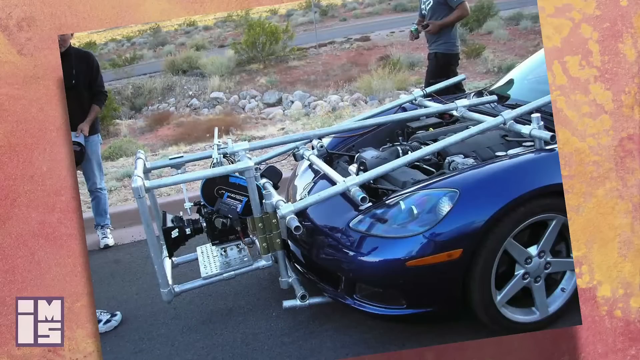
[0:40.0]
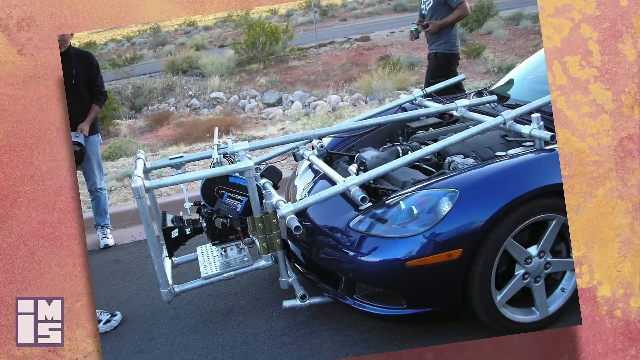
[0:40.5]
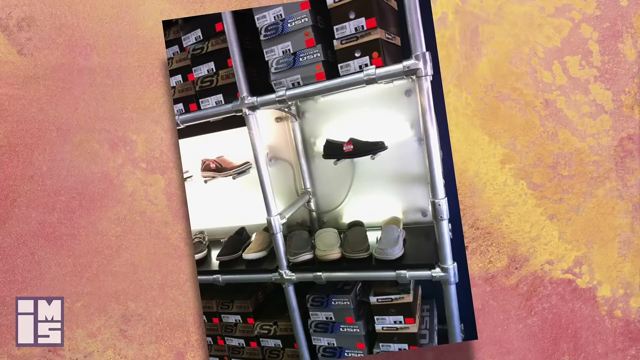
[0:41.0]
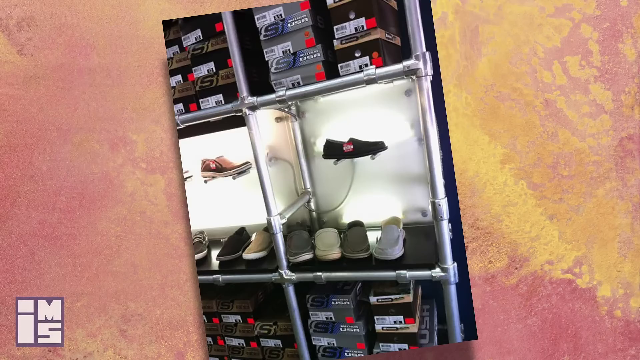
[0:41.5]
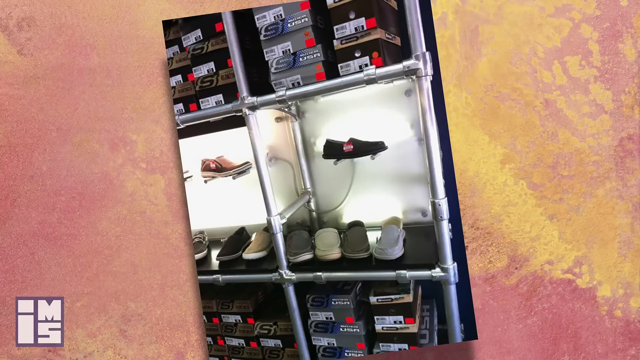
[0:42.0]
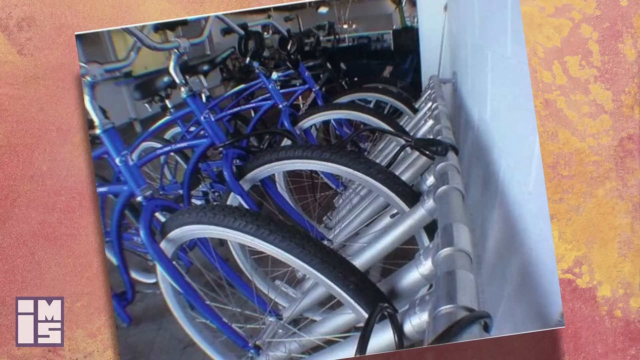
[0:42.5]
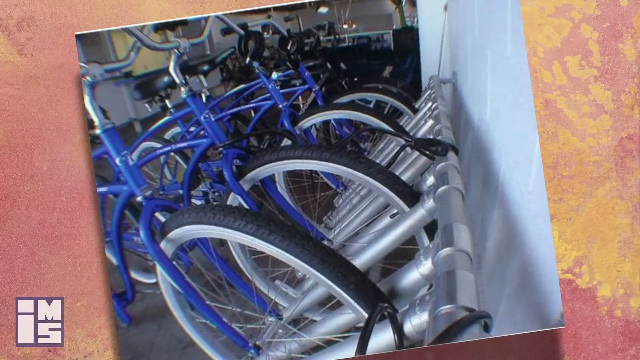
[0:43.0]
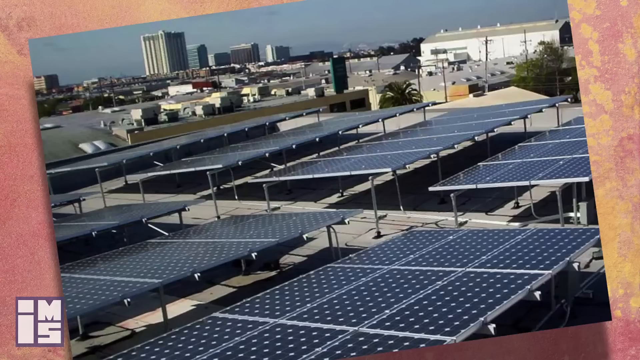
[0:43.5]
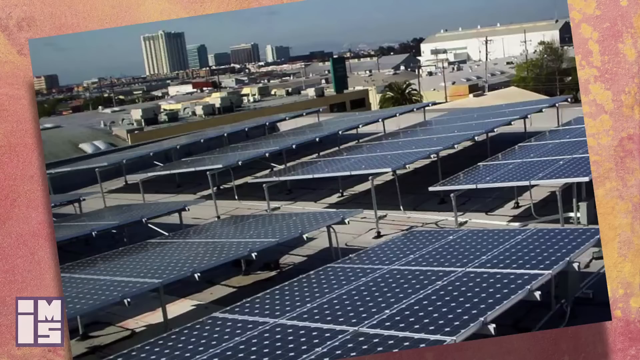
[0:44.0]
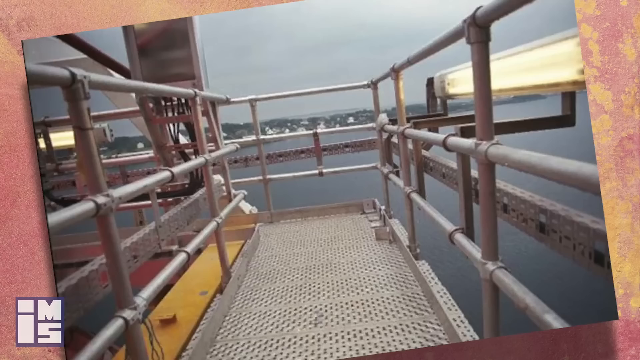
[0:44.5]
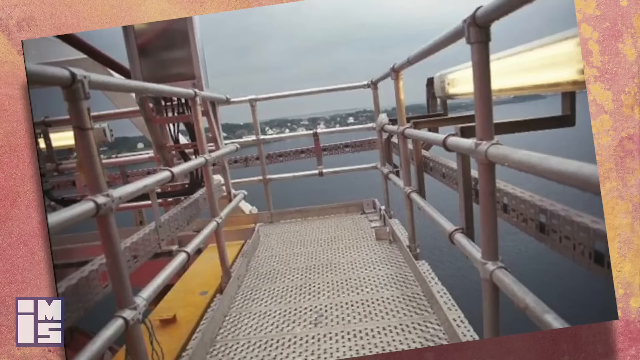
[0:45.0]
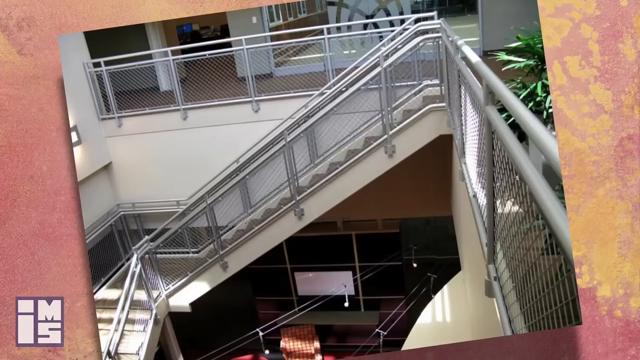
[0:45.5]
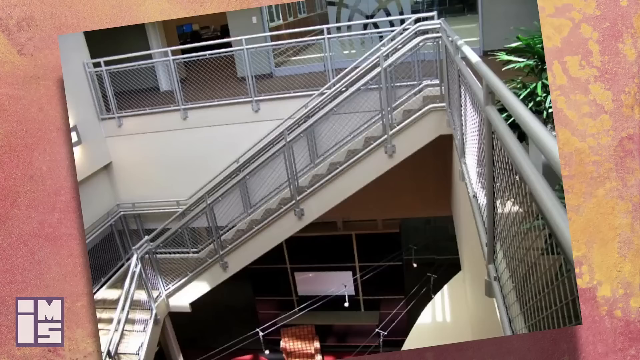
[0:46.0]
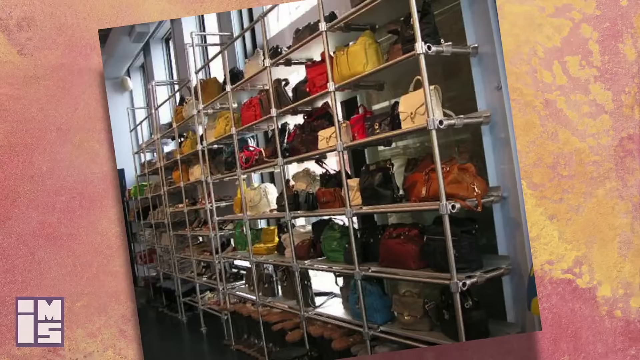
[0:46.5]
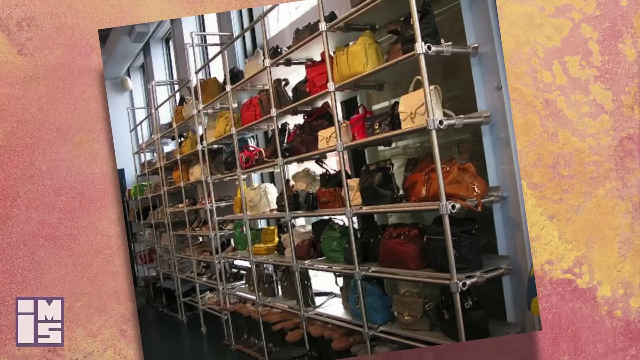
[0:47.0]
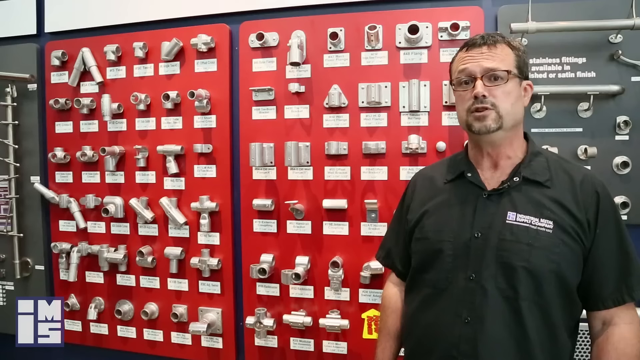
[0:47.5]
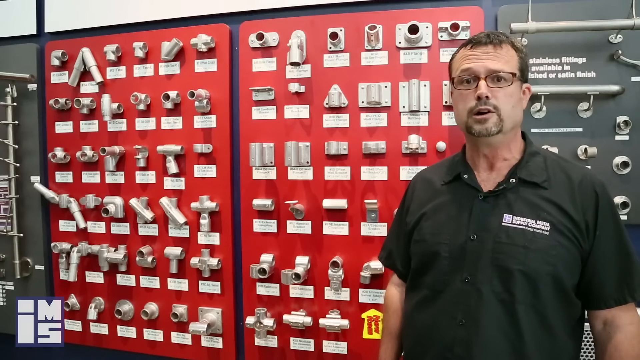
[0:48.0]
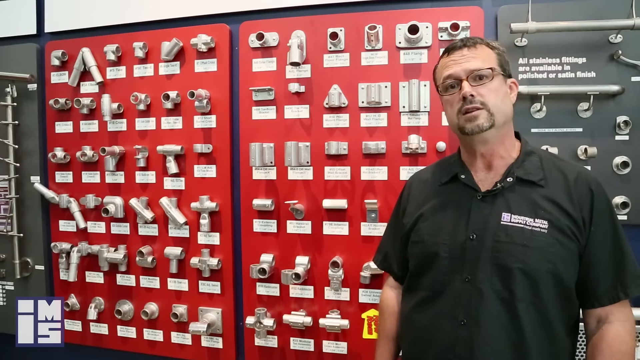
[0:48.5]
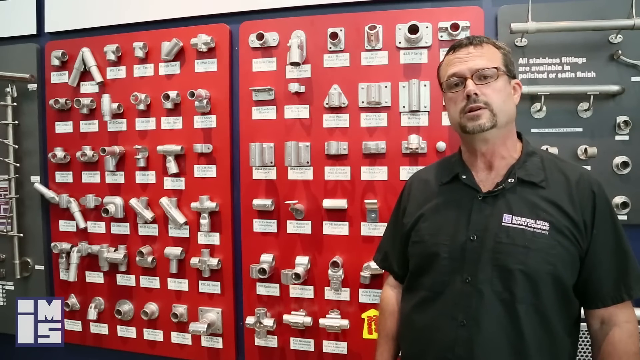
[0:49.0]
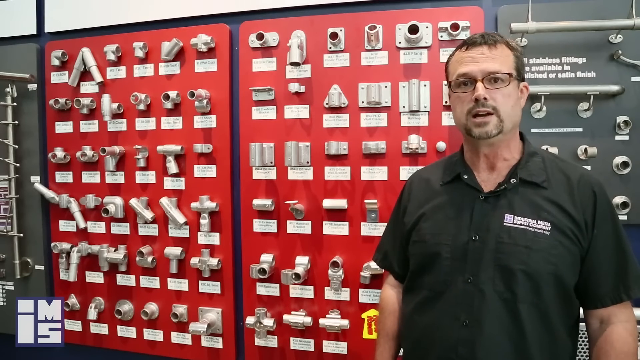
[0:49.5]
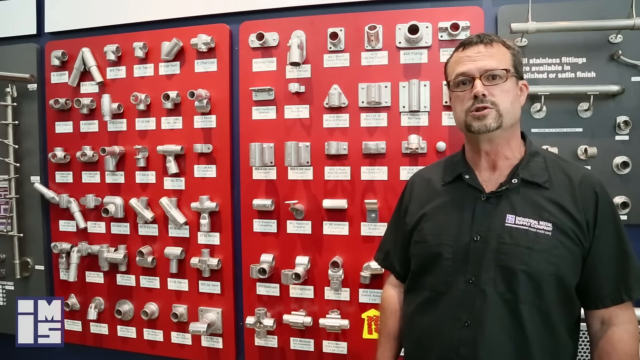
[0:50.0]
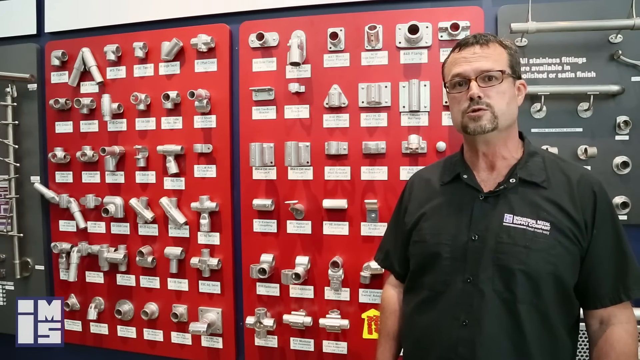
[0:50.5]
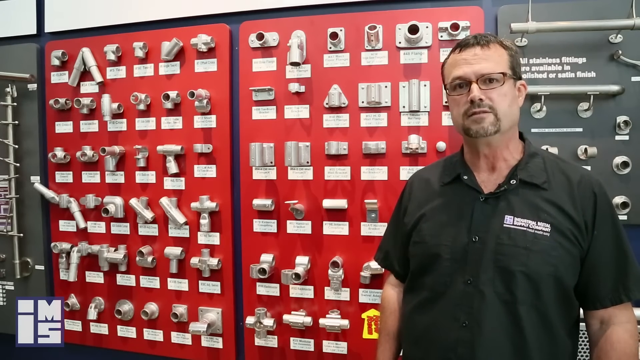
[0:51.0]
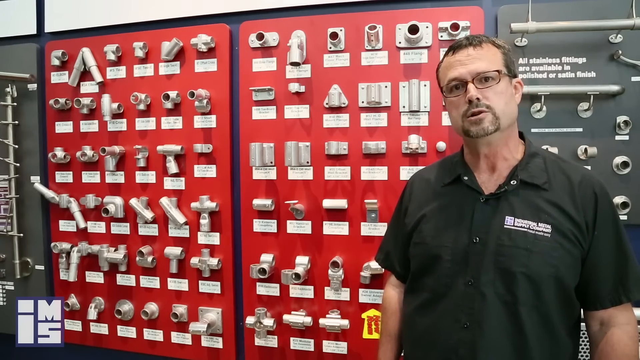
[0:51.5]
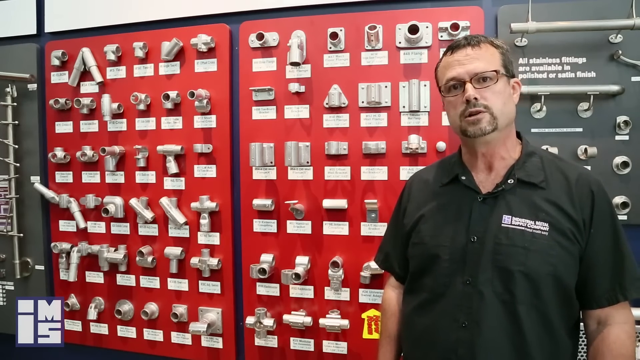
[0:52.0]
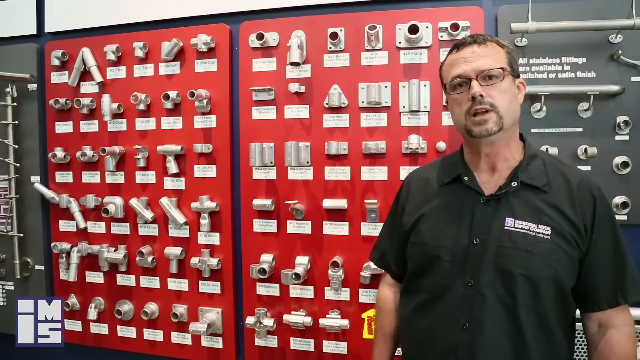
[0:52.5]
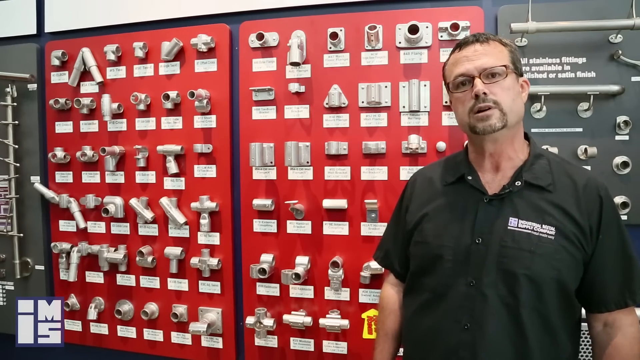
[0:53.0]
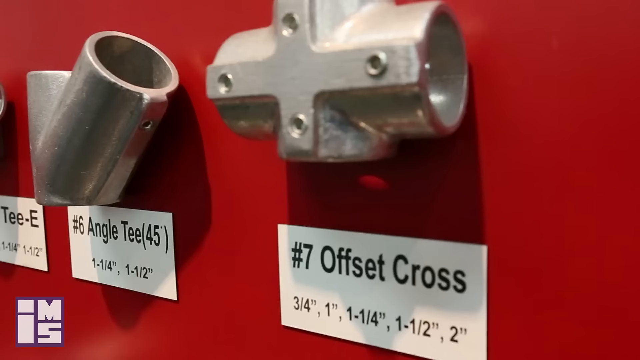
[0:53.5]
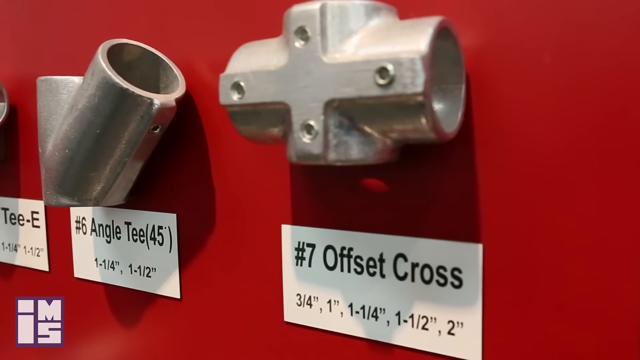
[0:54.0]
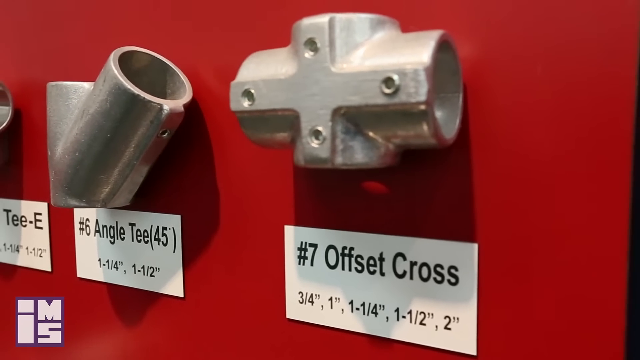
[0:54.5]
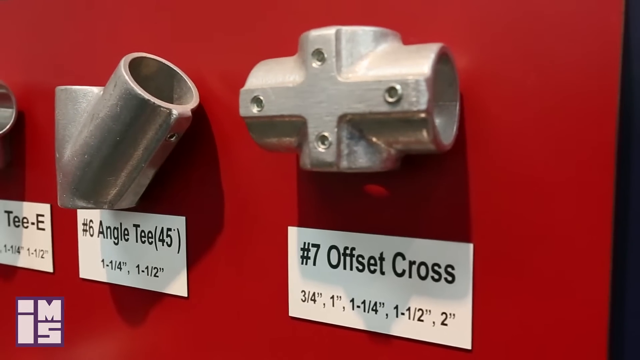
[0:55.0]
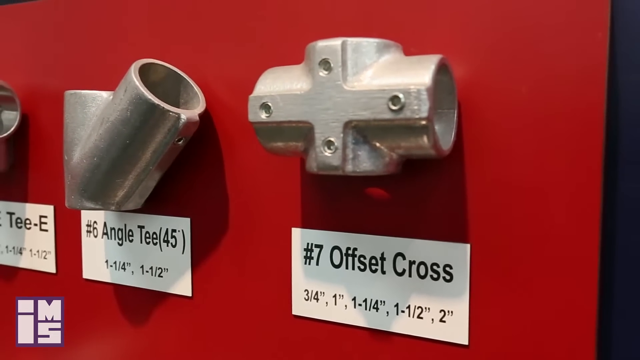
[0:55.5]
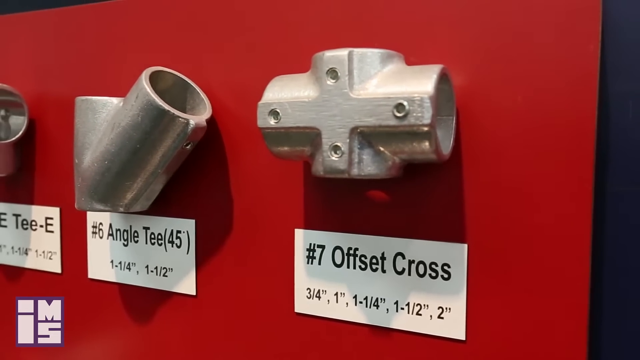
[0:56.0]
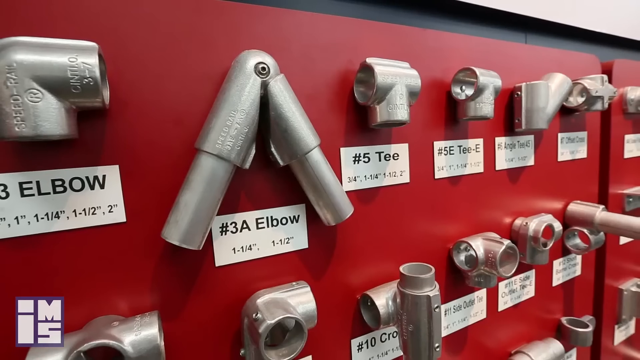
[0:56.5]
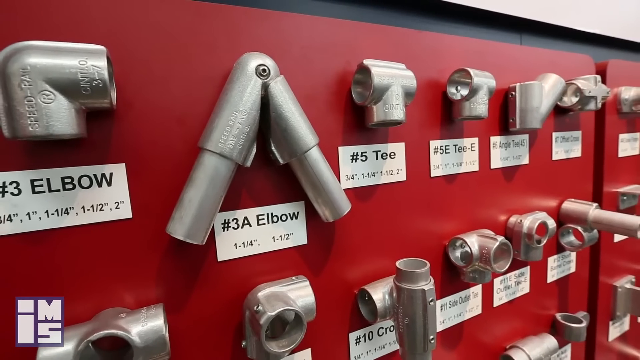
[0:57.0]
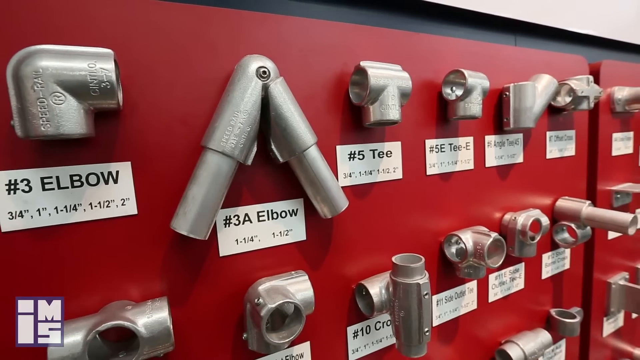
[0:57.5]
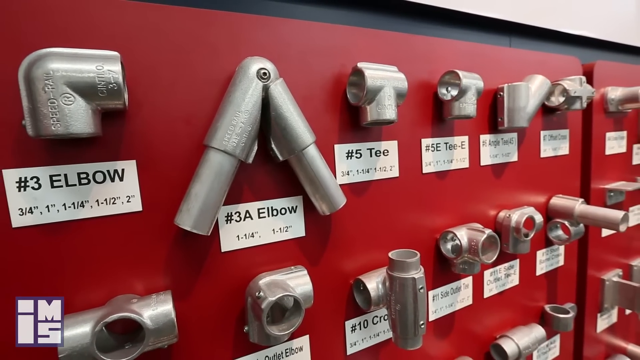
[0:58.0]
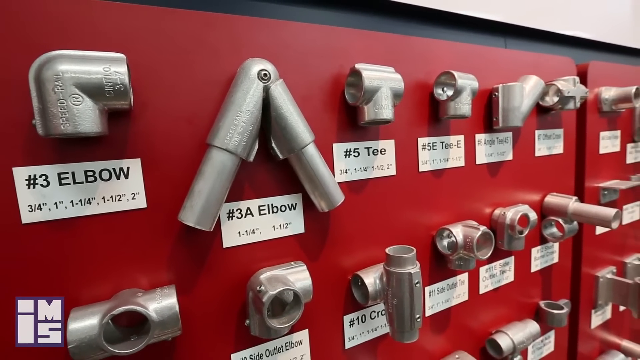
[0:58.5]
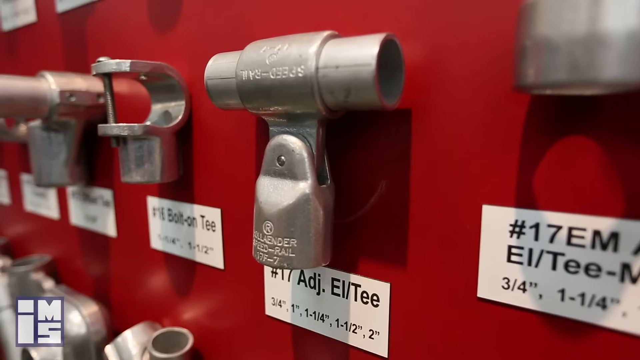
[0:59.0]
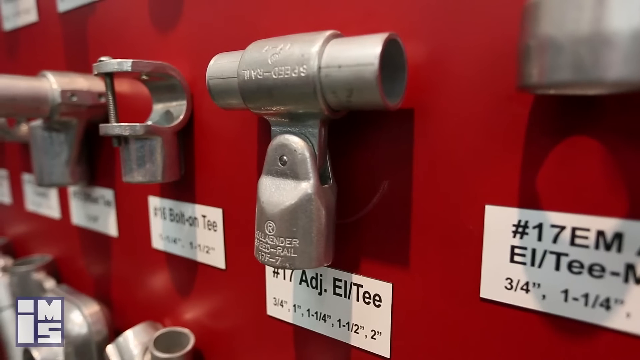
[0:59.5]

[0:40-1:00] A car in need of a certain part is shown, along with motorbikes and different types of products that the store offers.